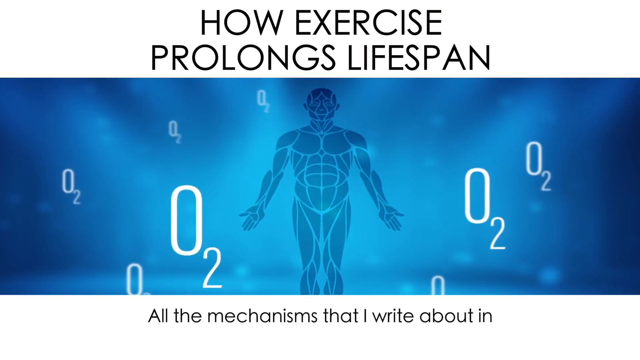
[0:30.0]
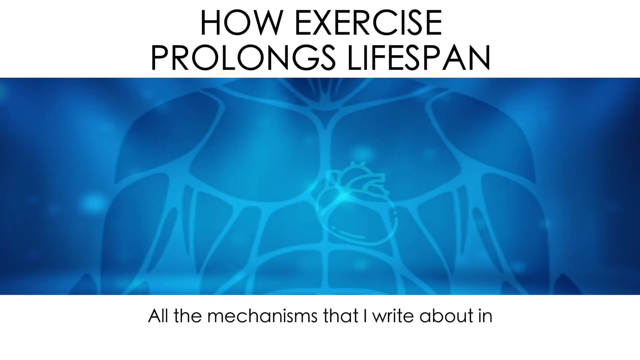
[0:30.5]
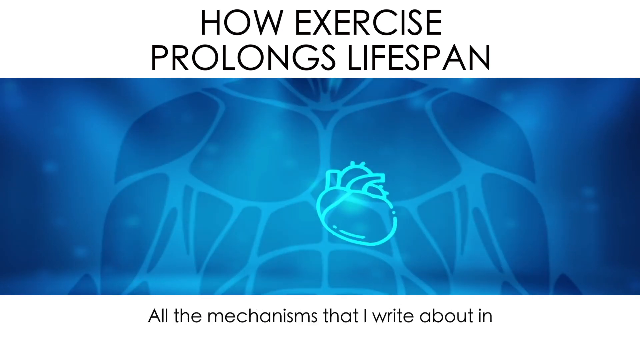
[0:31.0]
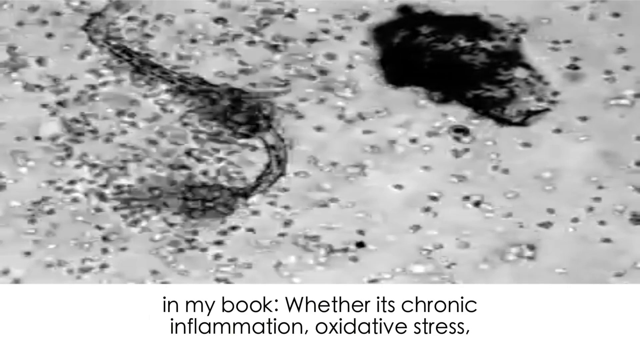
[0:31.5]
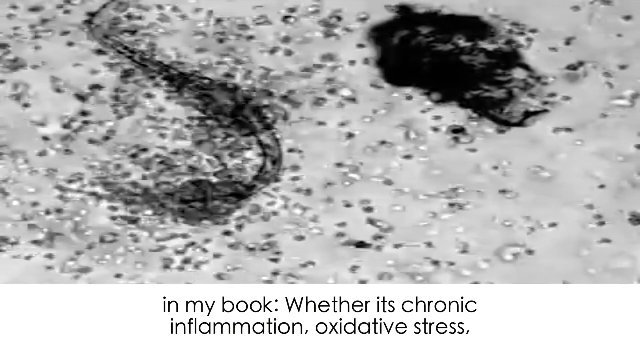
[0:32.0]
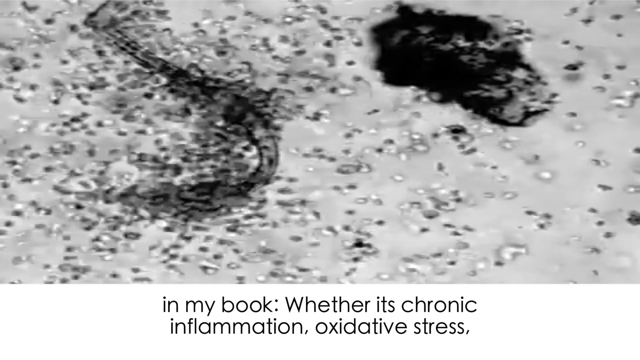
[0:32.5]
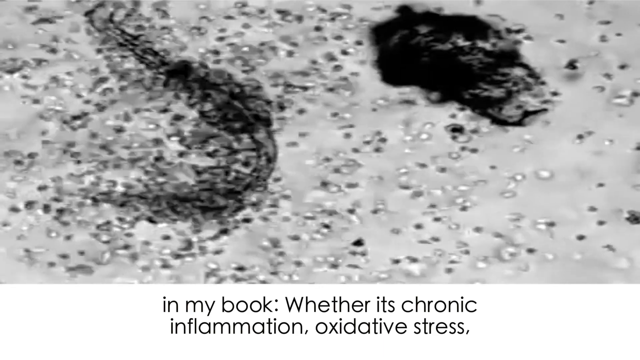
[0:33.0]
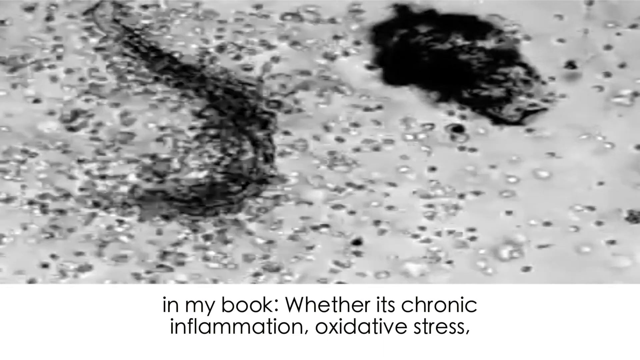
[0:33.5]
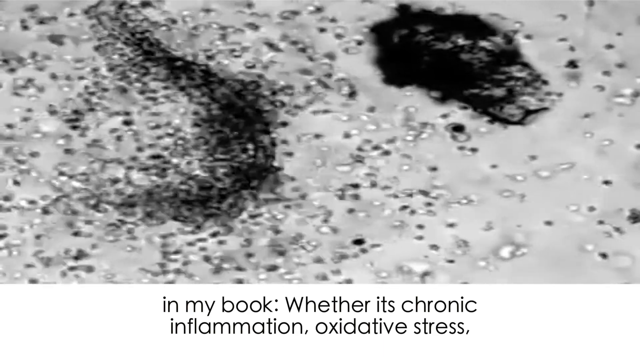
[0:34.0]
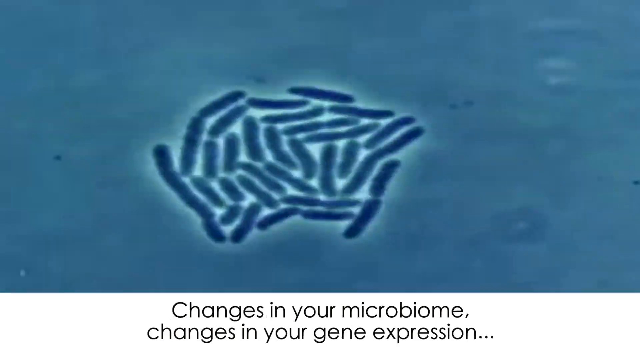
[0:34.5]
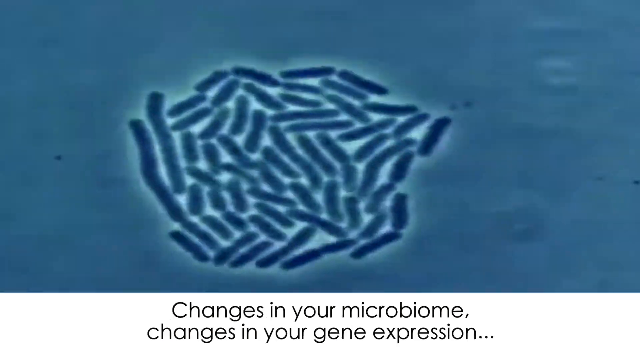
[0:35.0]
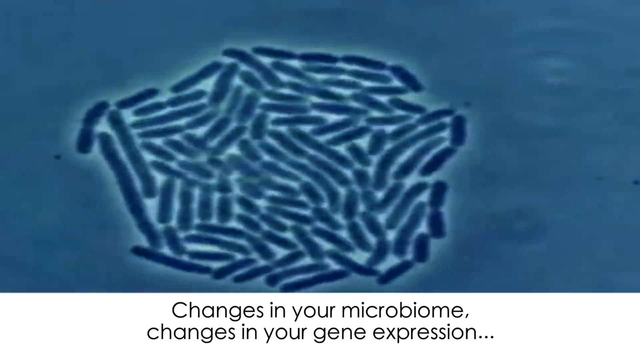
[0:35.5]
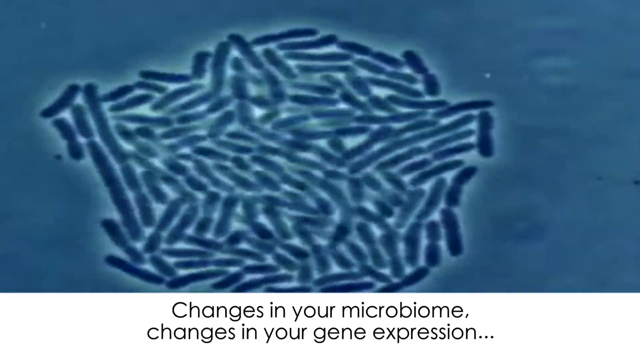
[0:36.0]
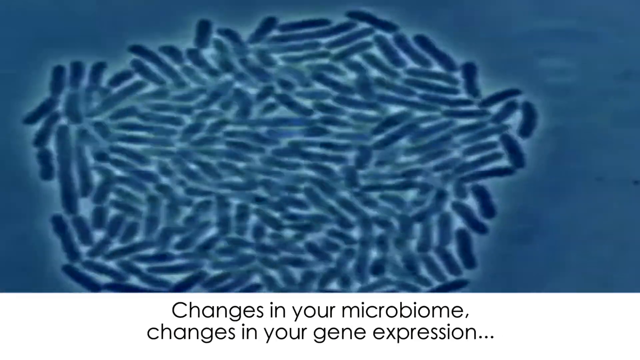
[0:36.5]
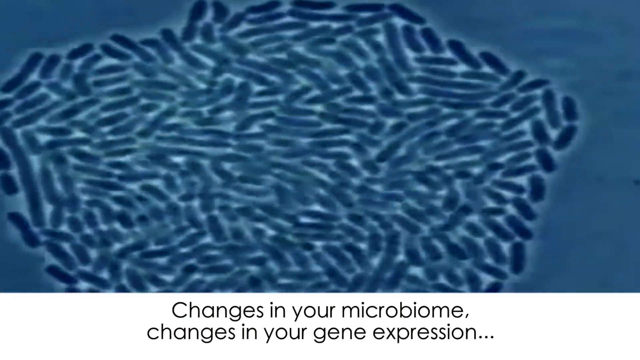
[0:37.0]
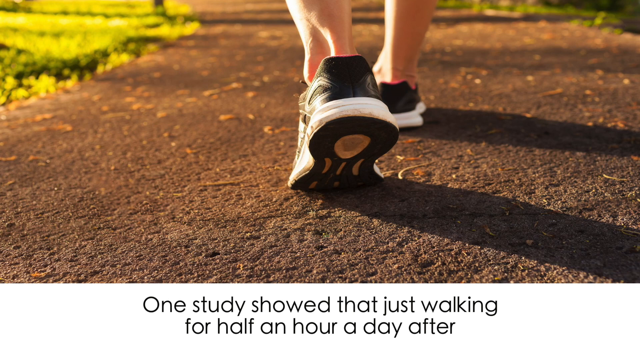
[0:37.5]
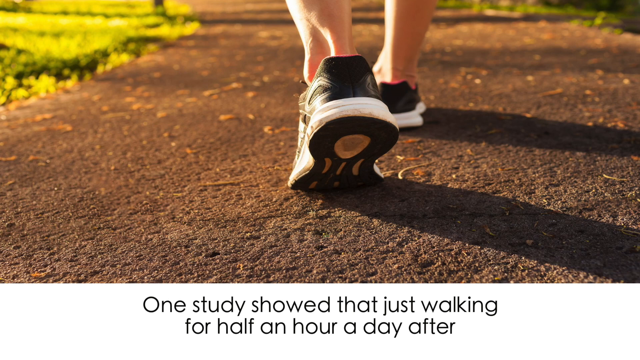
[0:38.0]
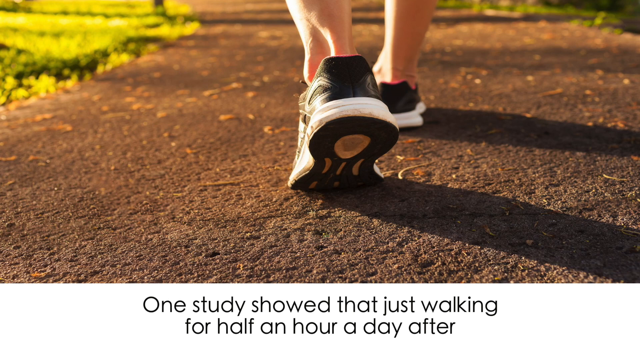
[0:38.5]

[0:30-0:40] The next graphics show the human body with the heart pumping inside, and more DNA-looking things like cells moving around. Then someone is seen running, with the shot focused on their shoes, on what seems to be pavement, or they are about to run. The shoes are black and white with an orange inside. Throughout, they are saying the mechanisms the author writes about in the book: chronic inflammation, oxidative stress, changes in the microbiome and changes in gene expression, before beginning "One study showed that just walking for half an hour a day", where it cuts off.